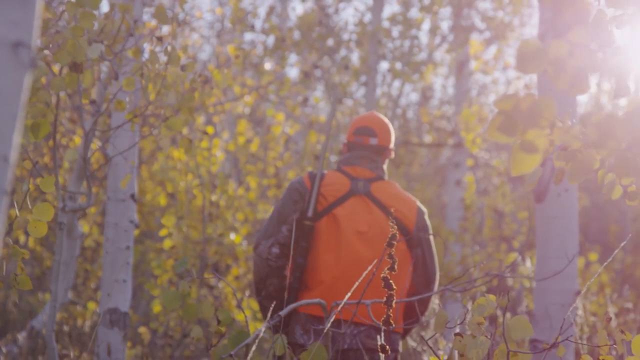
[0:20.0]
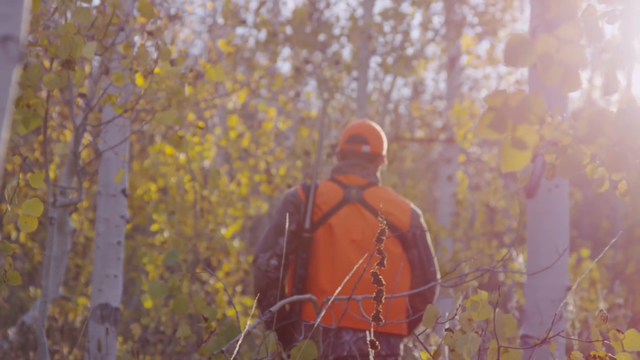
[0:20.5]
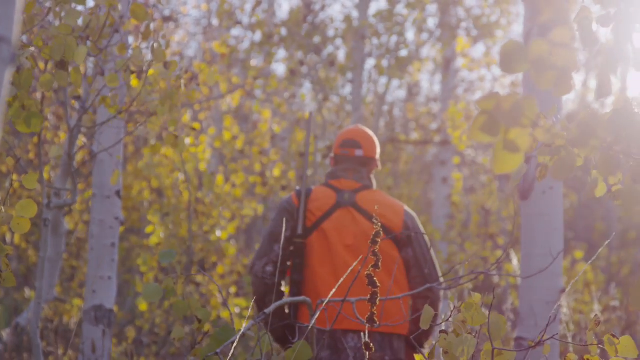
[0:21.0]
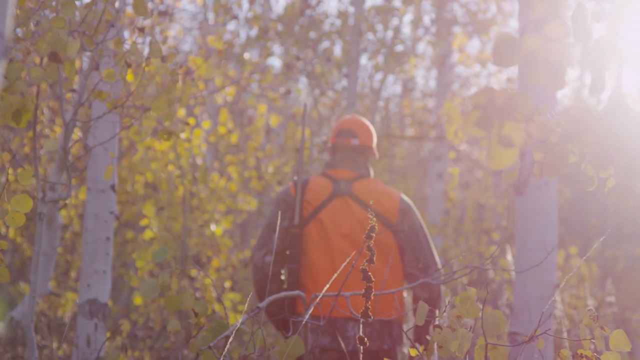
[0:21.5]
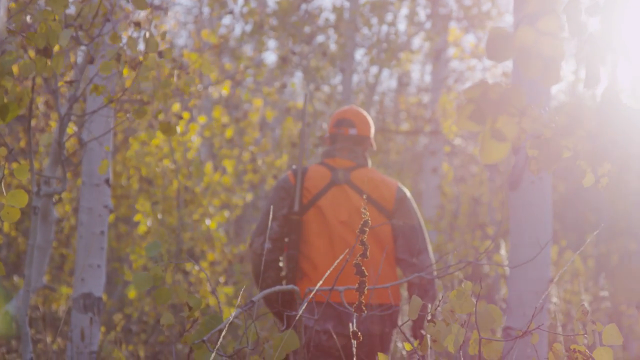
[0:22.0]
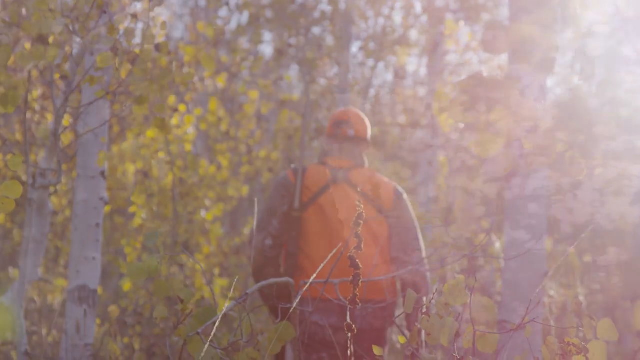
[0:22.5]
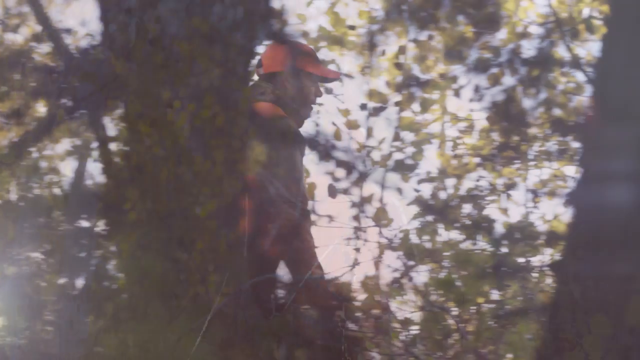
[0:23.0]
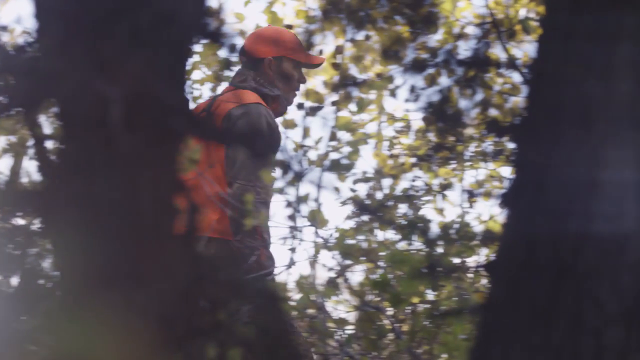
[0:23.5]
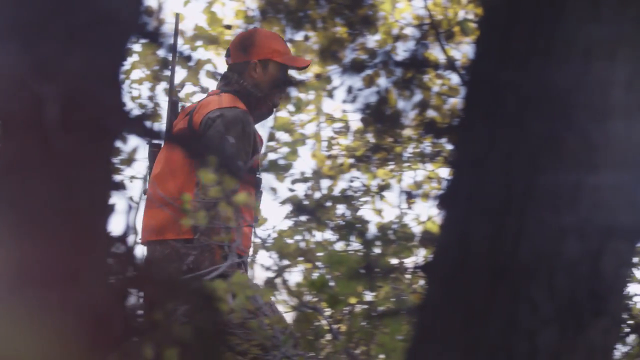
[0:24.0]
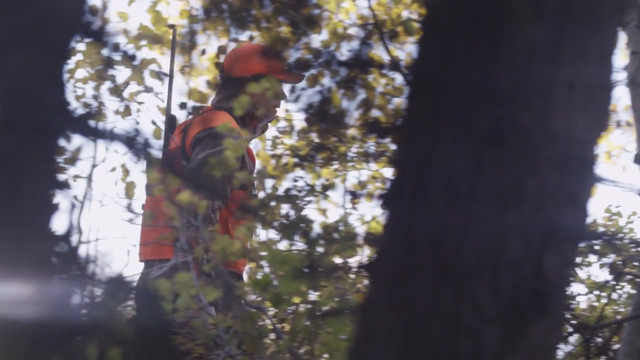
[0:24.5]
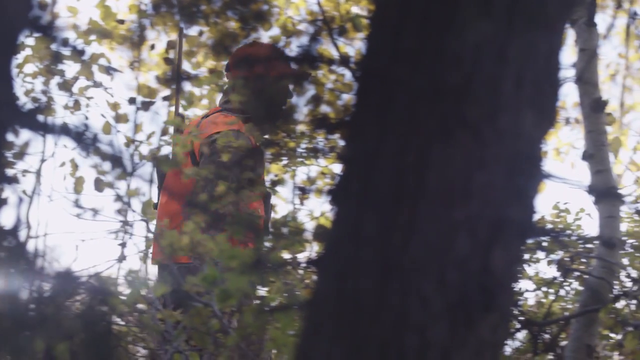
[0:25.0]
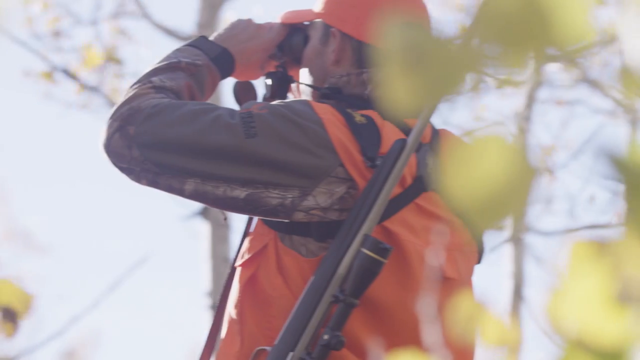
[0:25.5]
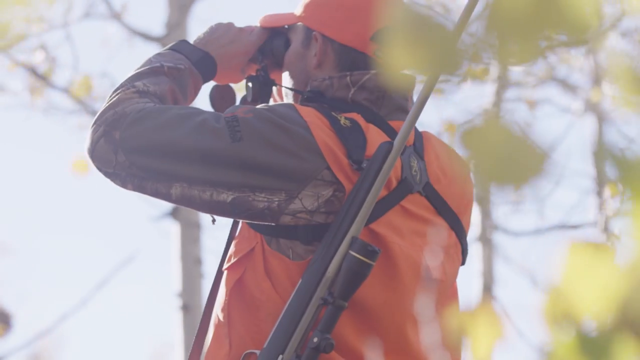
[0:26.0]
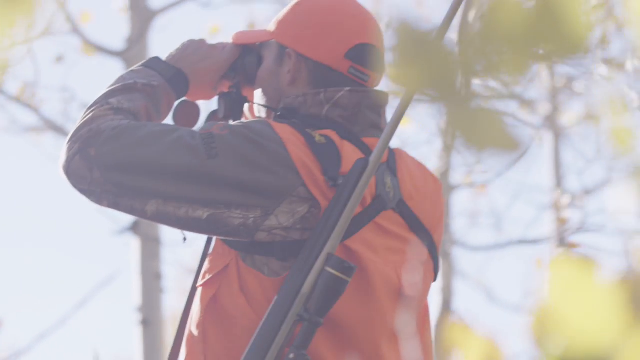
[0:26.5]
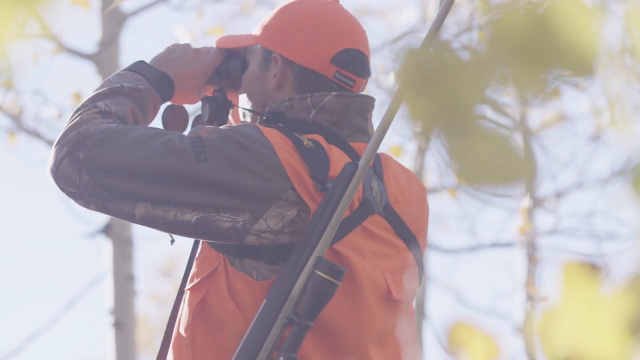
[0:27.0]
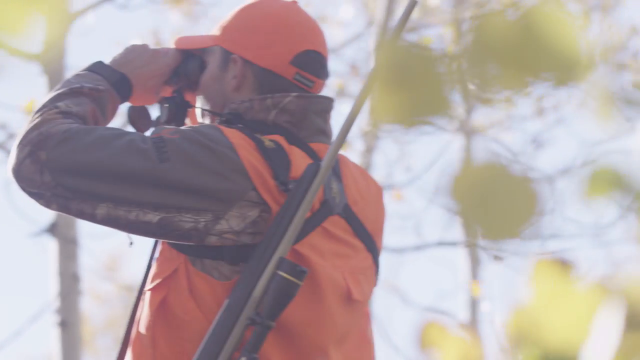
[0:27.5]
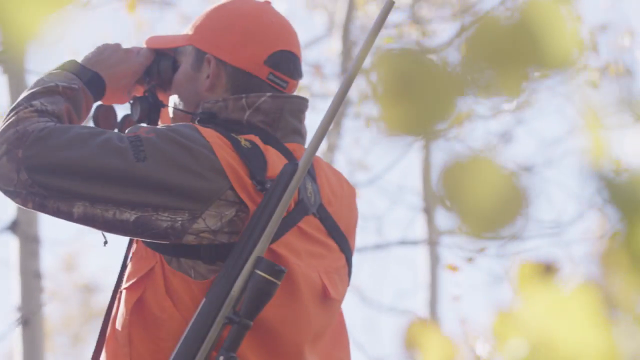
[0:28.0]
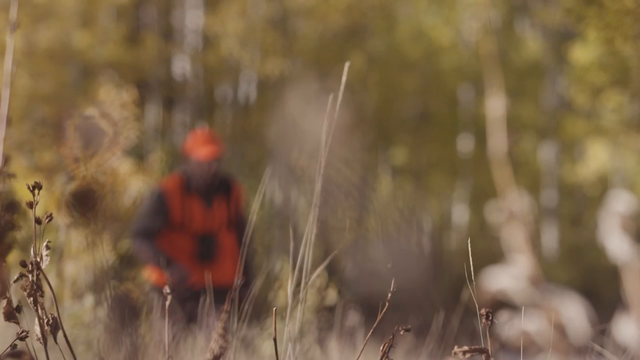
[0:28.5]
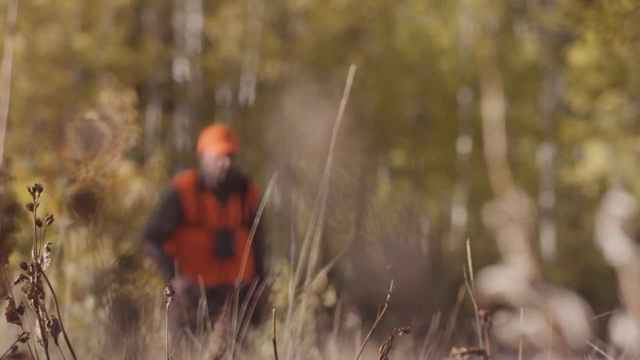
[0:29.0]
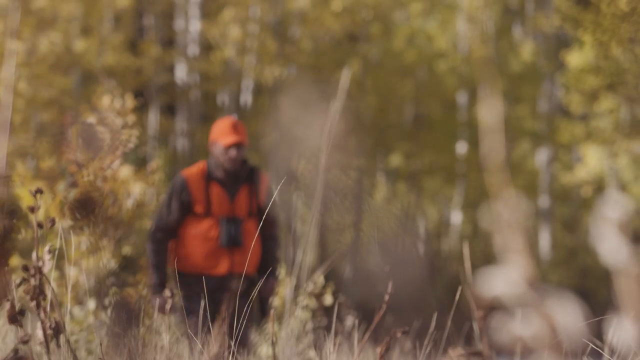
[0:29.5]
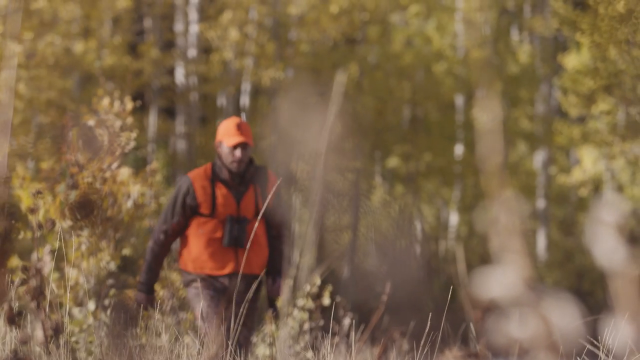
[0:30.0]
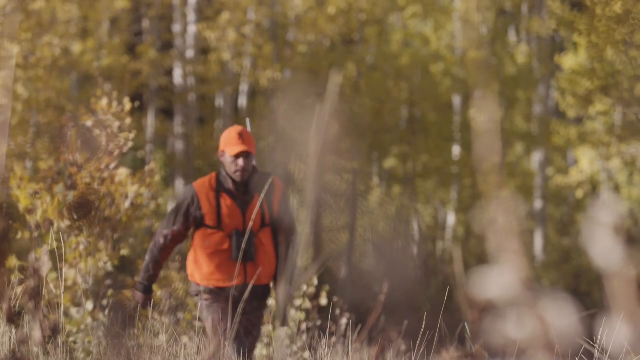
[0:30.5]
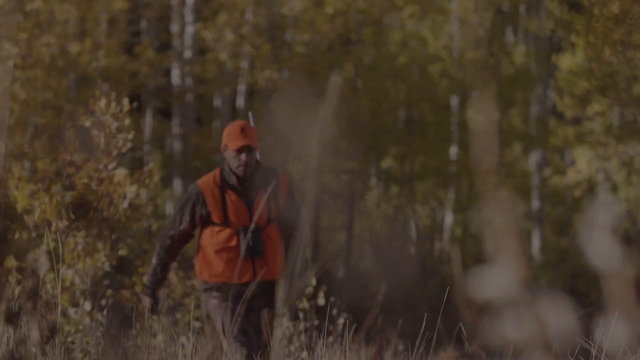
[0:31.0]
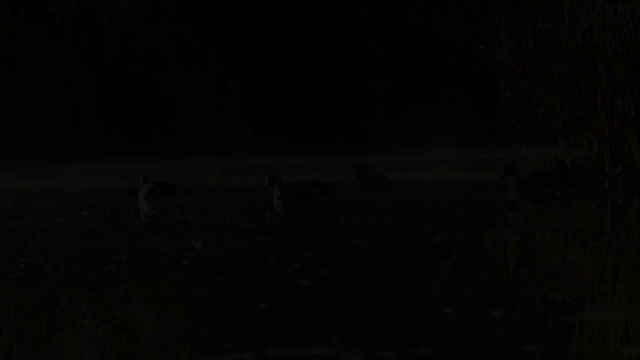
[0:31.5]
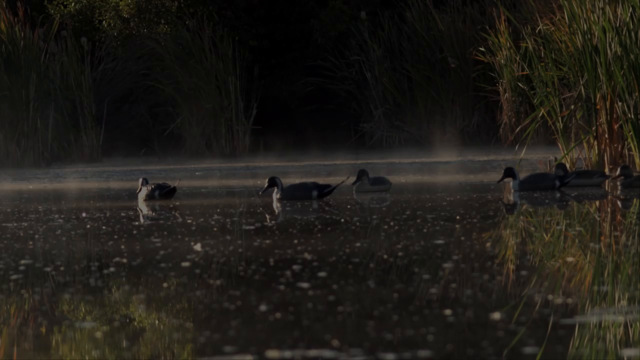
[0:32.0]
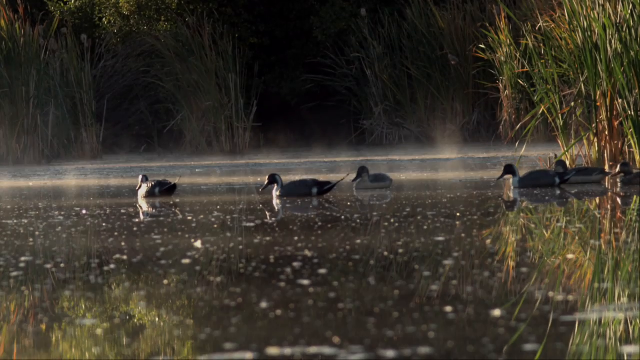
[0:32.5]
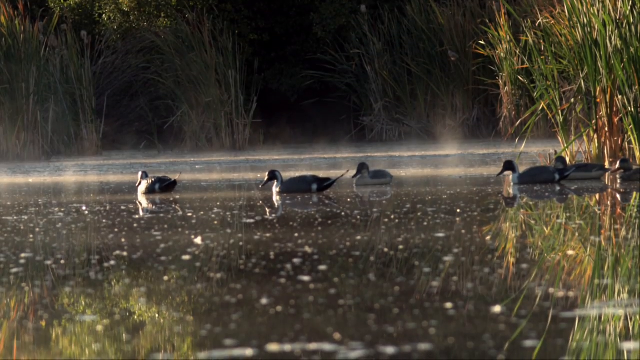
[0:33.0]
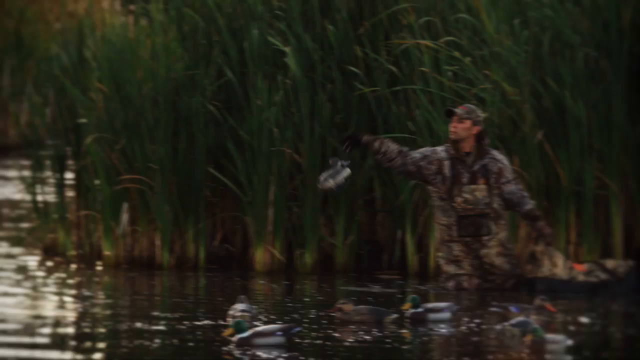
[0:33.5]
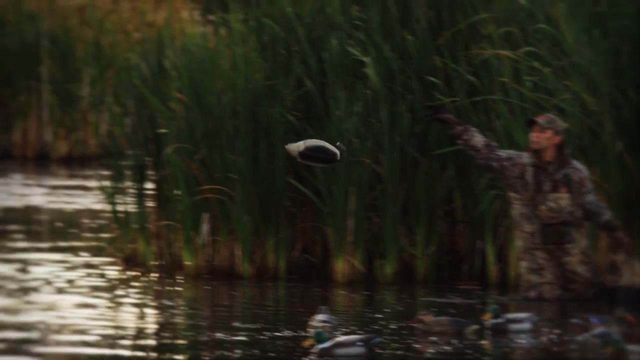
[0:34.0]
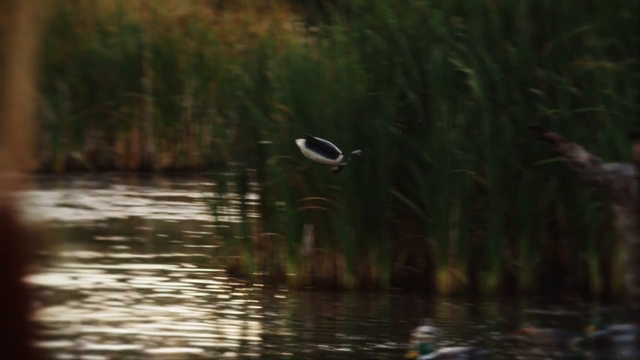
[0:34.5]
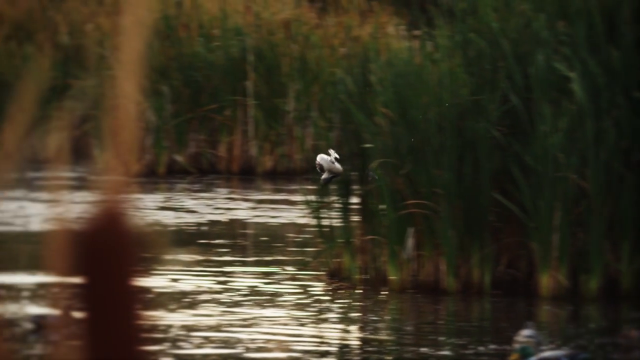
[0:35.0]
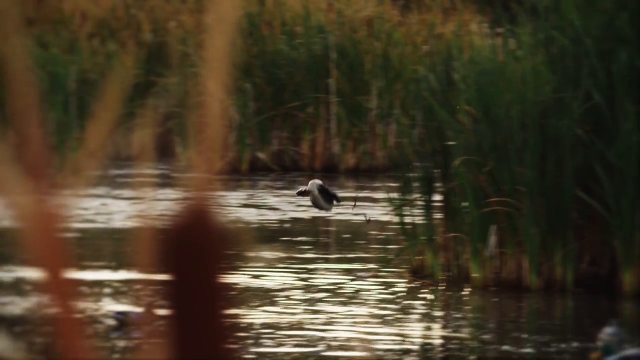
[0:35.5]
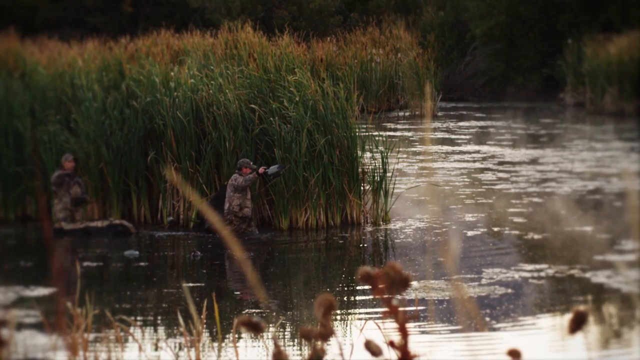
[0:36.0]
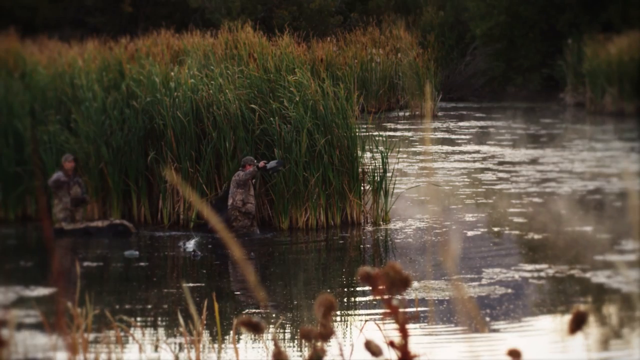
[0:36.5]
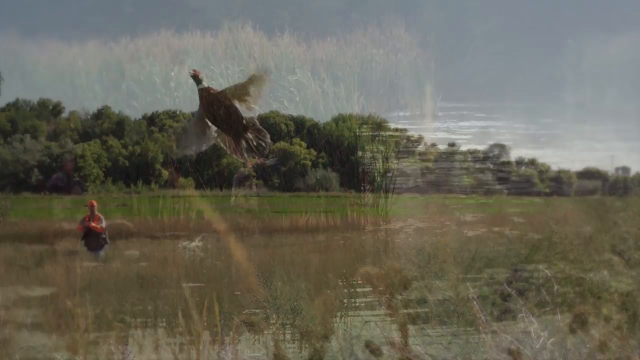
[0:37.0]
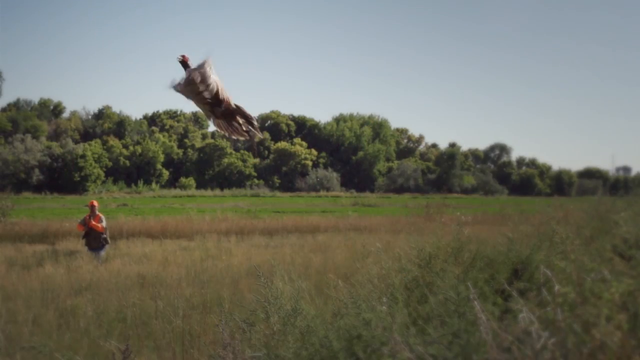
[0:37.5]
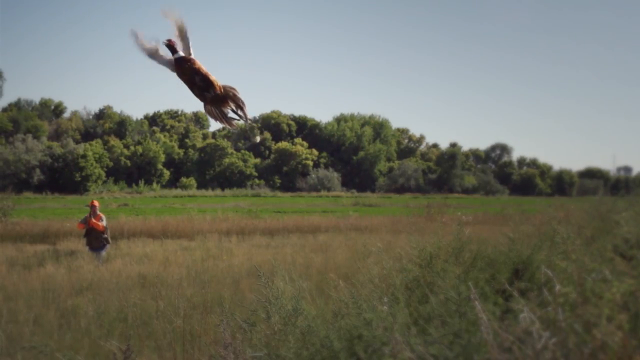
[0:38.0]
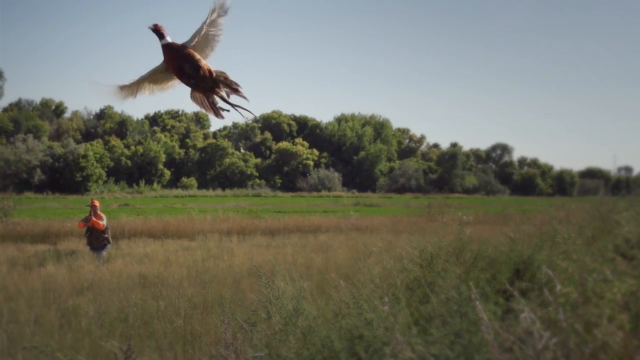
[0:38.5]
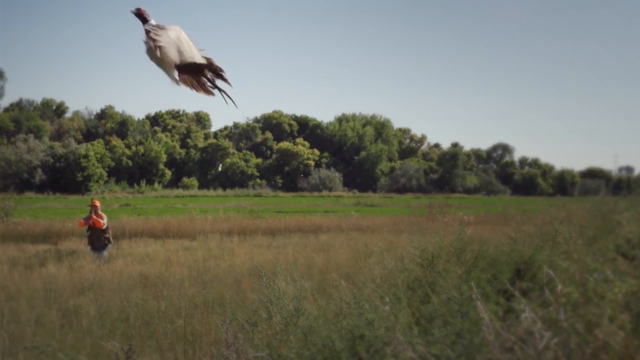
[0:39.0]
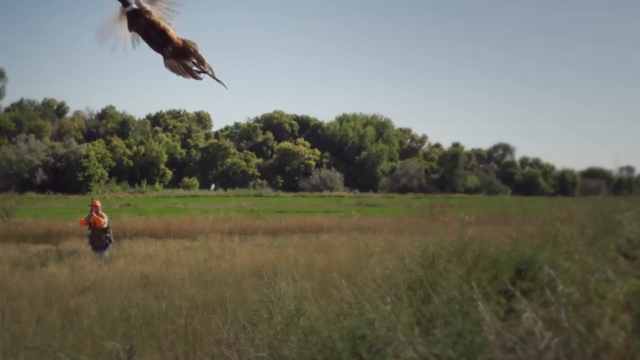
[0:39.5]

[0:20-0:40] The man keeps walking calmly through the forest, wearing an orange cap matching his clothes. He carries a hunting shotgun and binoculars on his back. Holding the binoculars with both hands, he looks around into the distance, apparently searching for an animal to hunt. A lake appears with several ducks bathing in it. A person in a camouflaged army outfit appears and throws something into the middle of the lake. A duck then takes off and flies very high, and the hunter prepares his shotgun to shoot. The place seems to be one where people practice hunting shots at ducks.